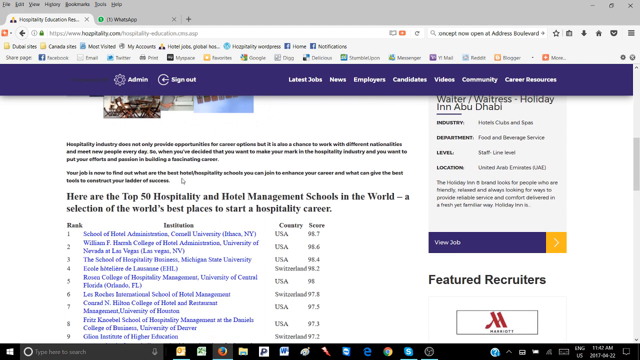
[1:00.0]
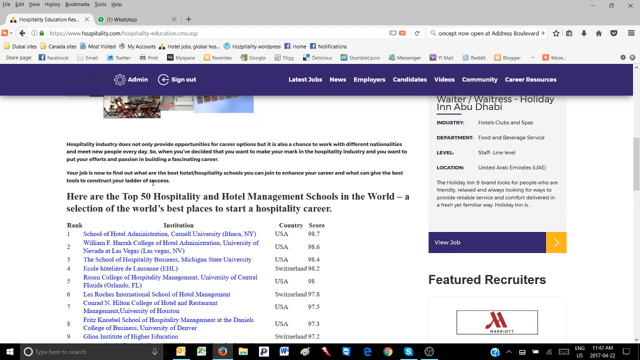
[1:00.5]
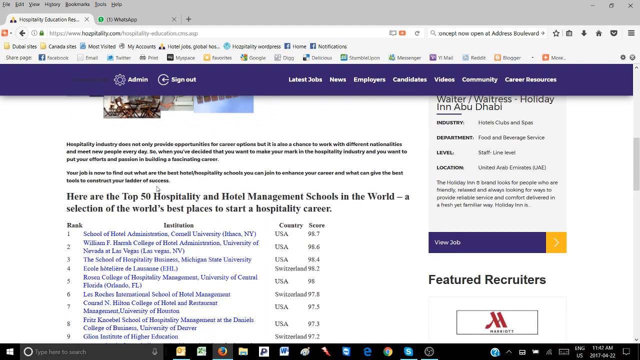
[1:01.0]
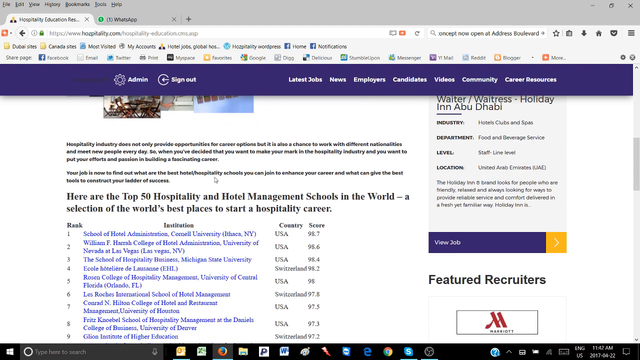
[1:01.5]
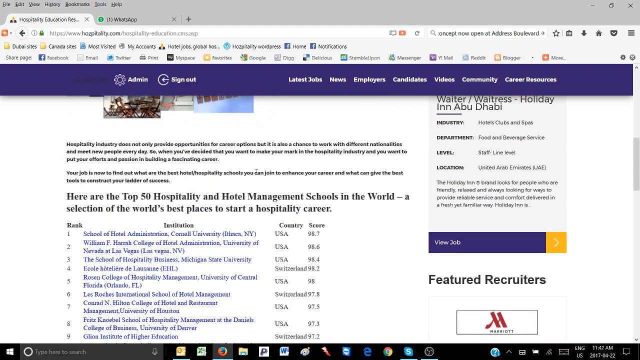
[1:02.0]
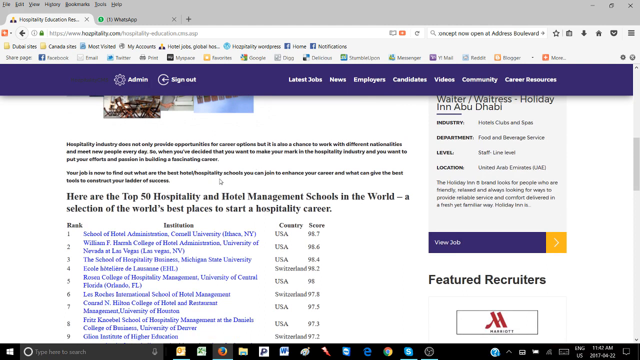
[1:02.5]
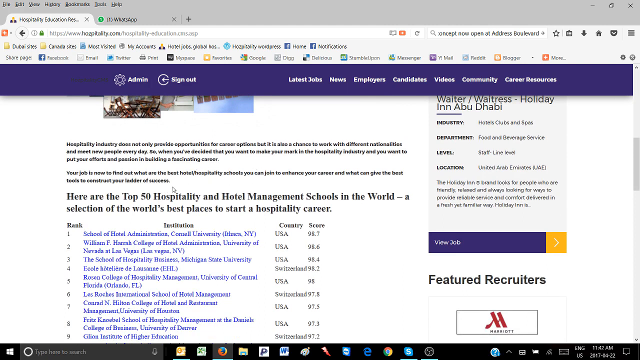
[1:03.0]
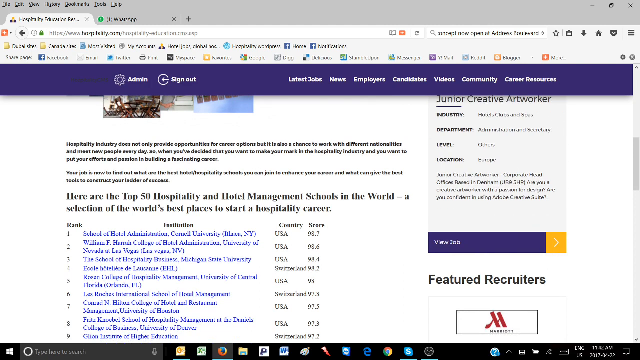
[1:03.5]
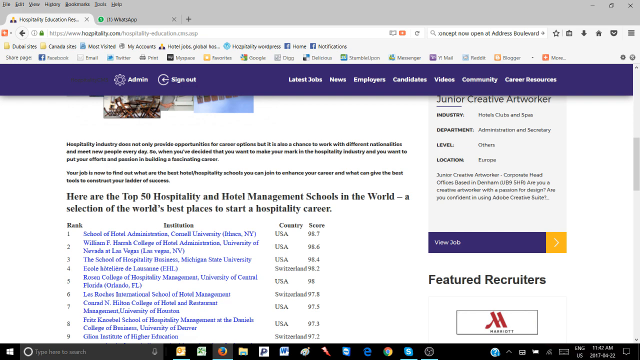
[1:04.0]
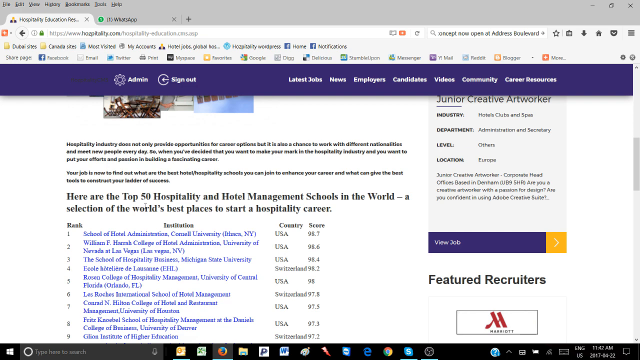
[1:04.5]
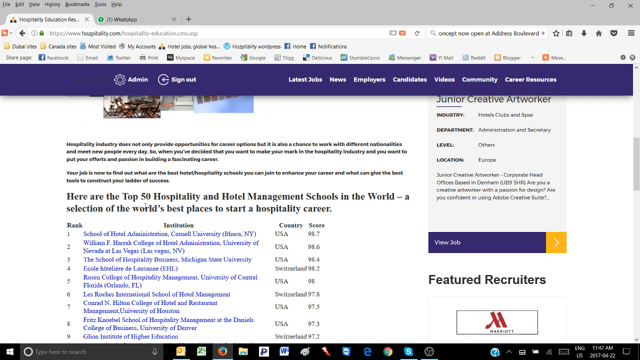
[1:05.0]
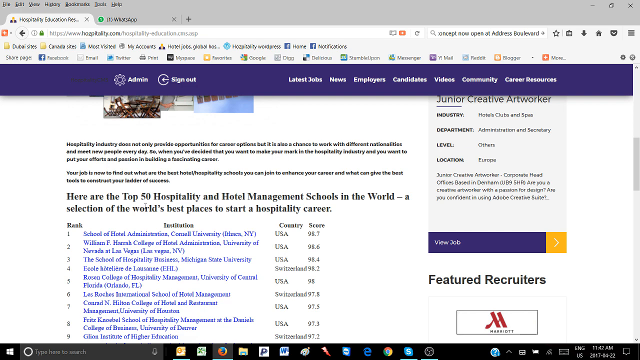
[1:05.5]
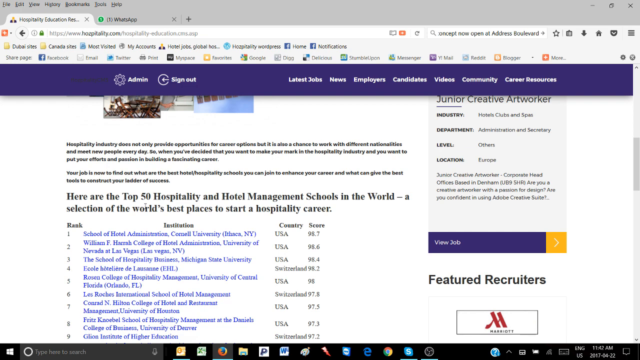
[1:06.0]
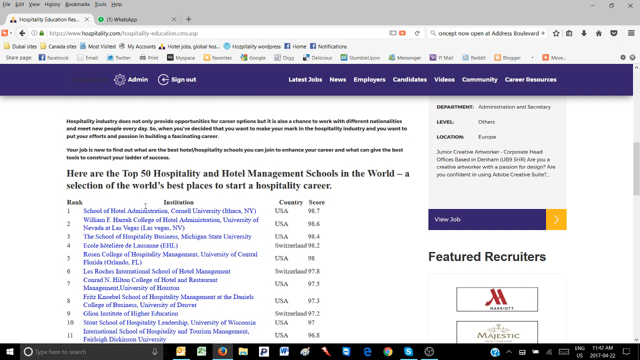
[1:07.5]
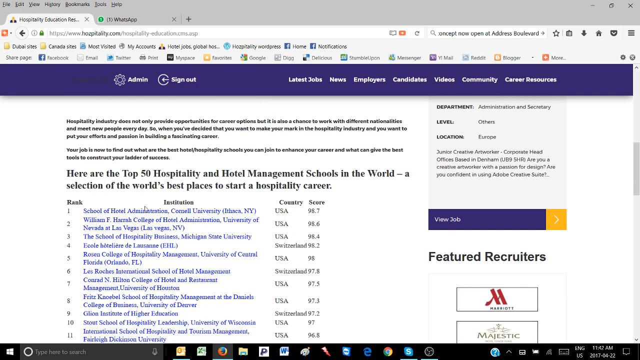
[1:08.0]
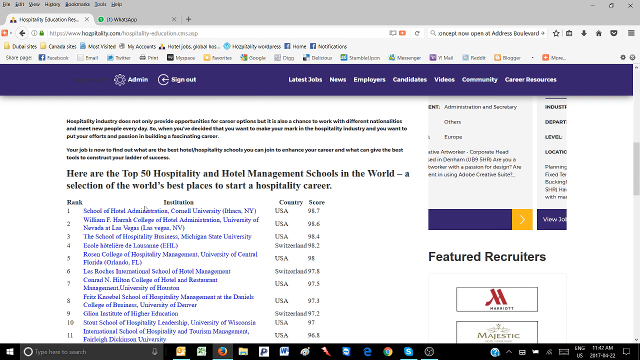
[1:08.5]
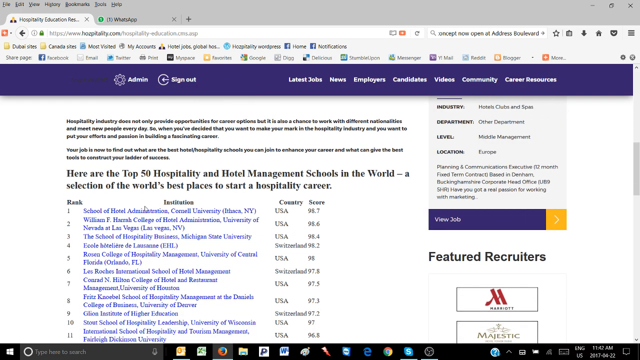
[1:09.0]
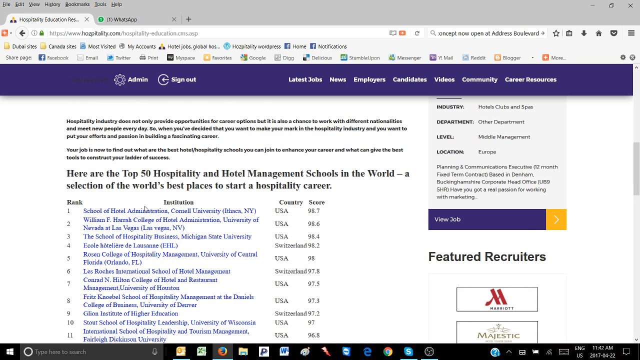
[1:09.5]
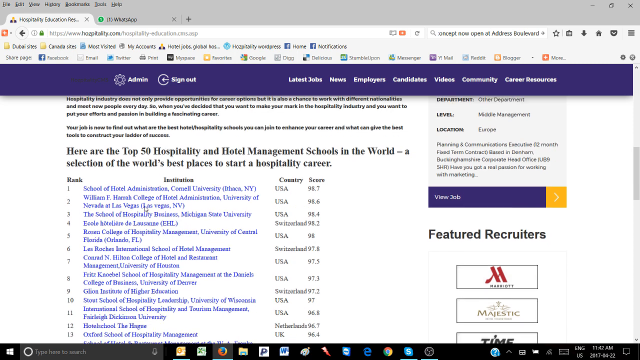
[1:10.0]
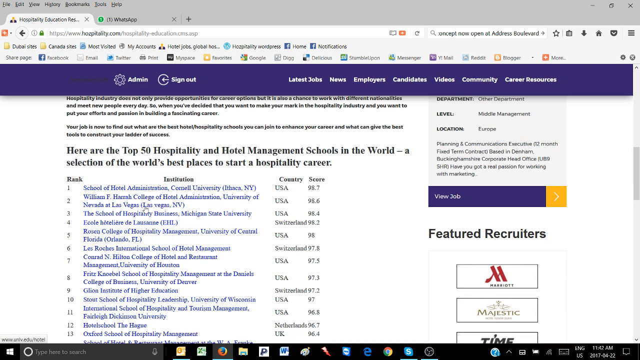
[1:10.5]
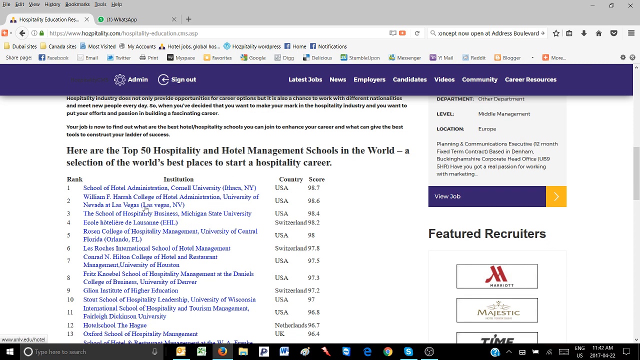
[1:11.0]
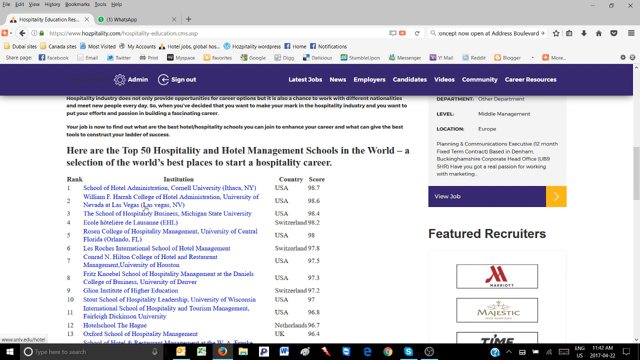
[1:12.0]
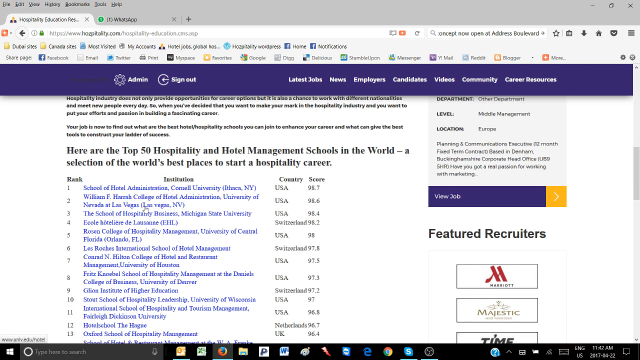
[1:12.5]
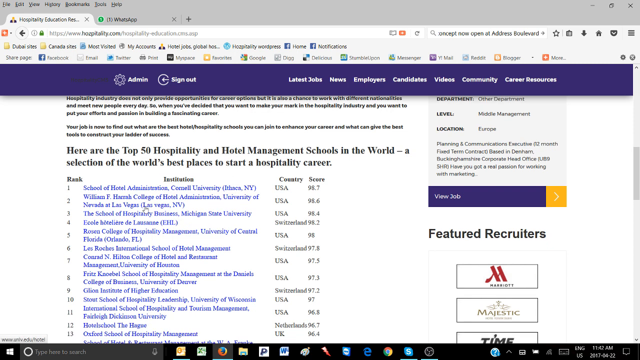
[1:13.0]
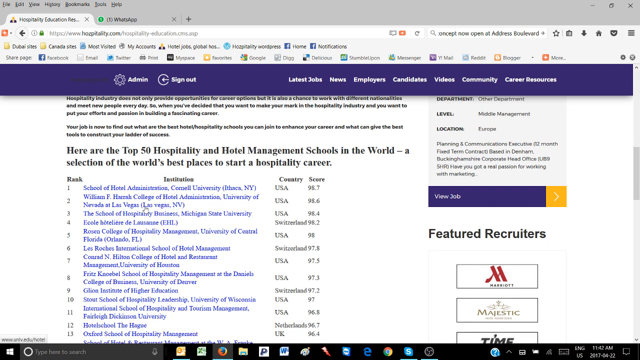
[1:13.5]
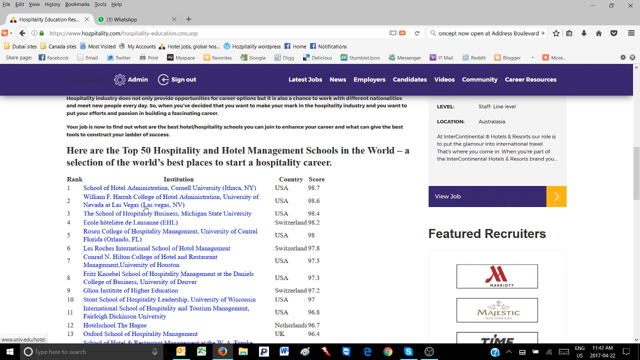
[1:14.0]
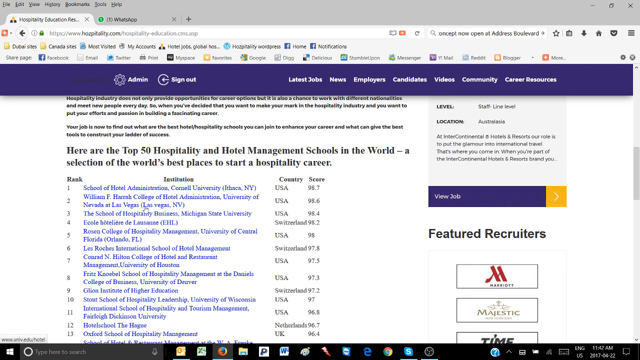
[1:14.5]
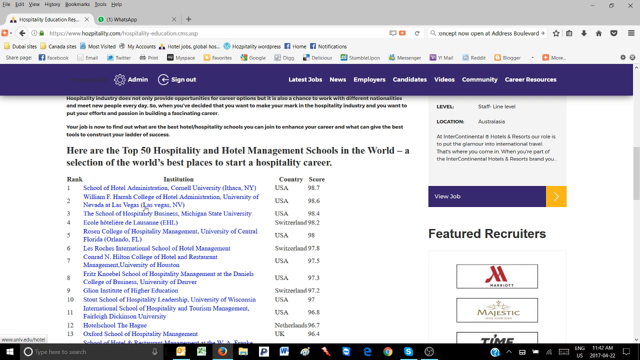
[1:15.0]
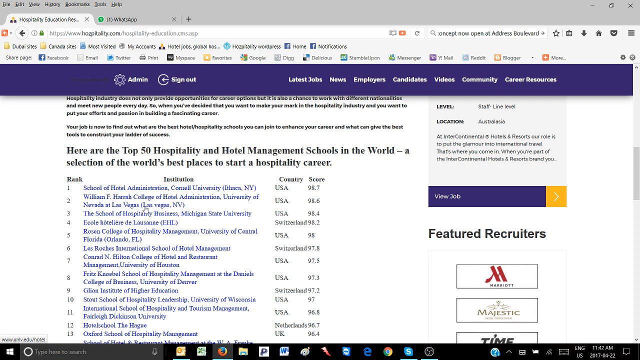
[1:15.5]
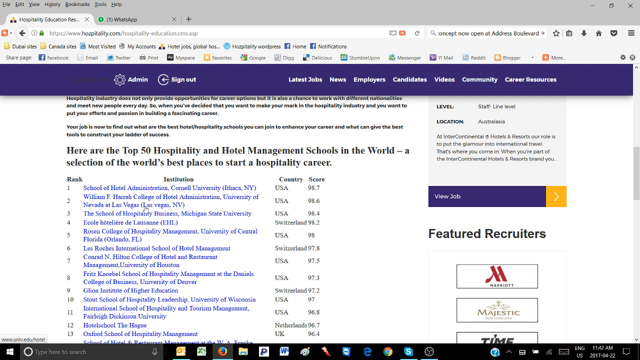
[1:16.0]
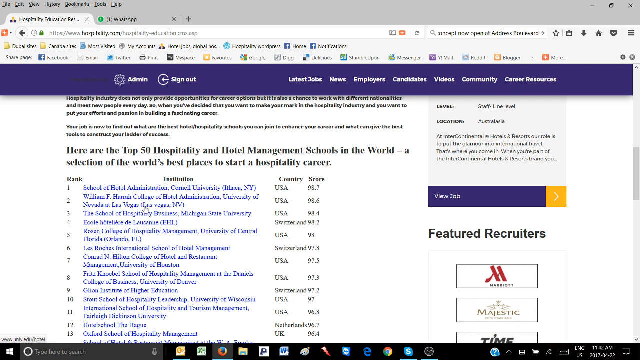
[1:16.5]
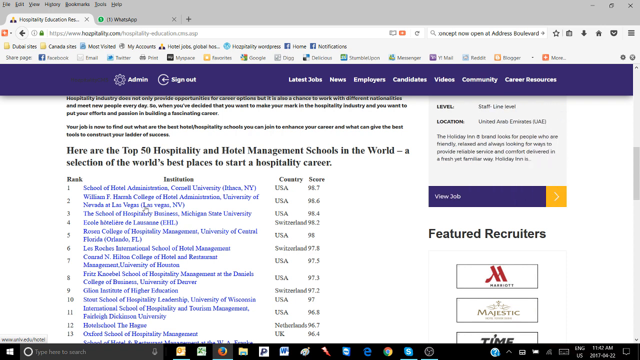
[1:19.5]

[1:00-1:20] A triangle-shaped cursor moves around the middle of the screen, then goes over to where the screen slowly rolls from the bottom to the top. There are many clickable areas. A tiny pin covers the third entry down, the school of hospitality and business. The country appears beside the list of hyperlinks; nine hyperlinks are visible, and as the page scrolls more appear. The middle column gives the country, and a small third column next to it gives the score for that school in that country. Text reads "a selection of the world's best places to start your hospitality career", and the list shows the top 50 hospitality schools and hotel management; at most 13 are visible at a time. Halfway down on the right side is a featured recruiters section, including Marriott and the Majestic.